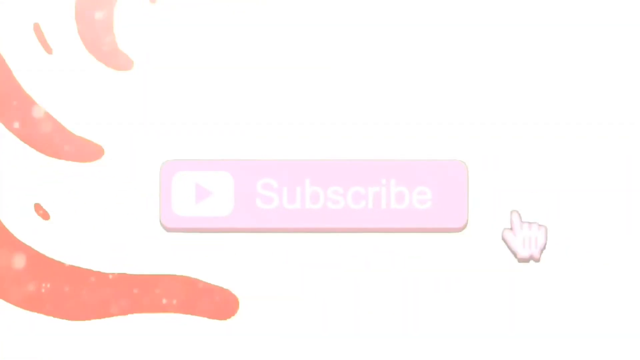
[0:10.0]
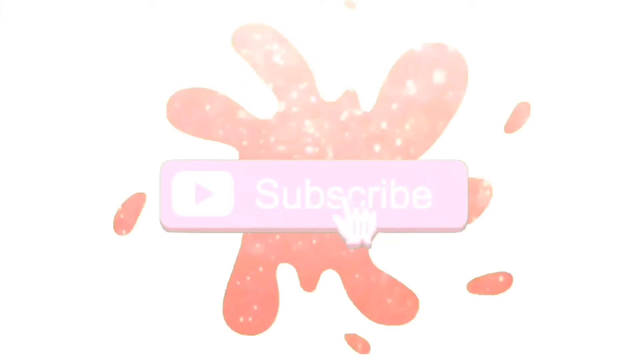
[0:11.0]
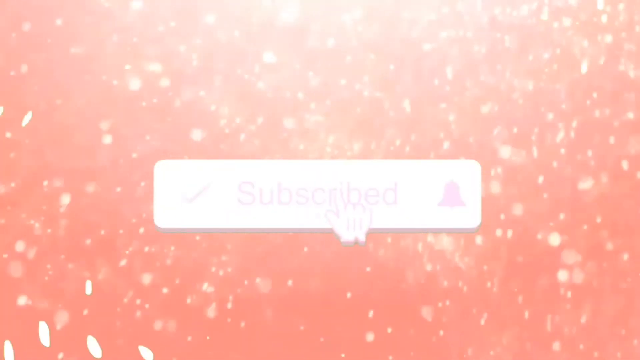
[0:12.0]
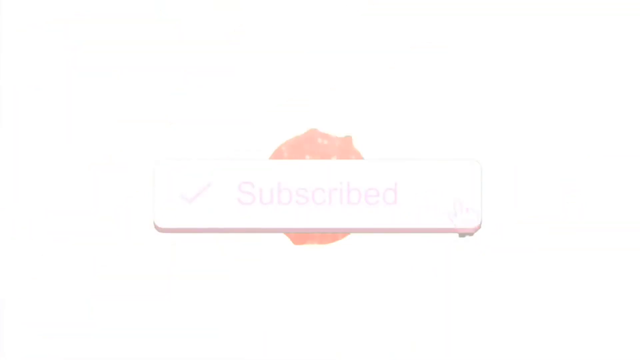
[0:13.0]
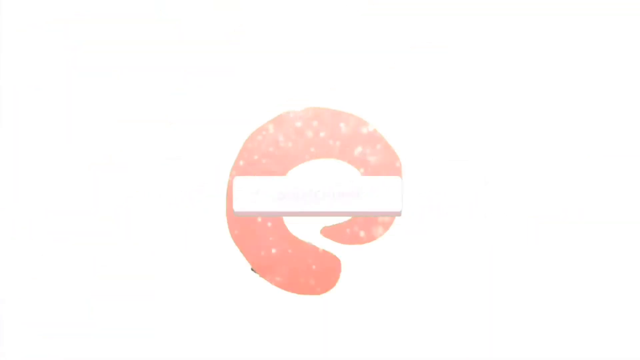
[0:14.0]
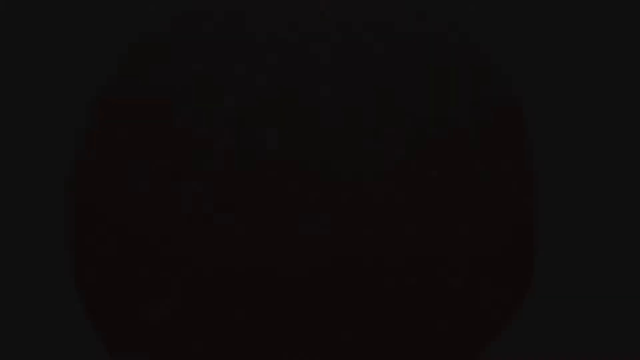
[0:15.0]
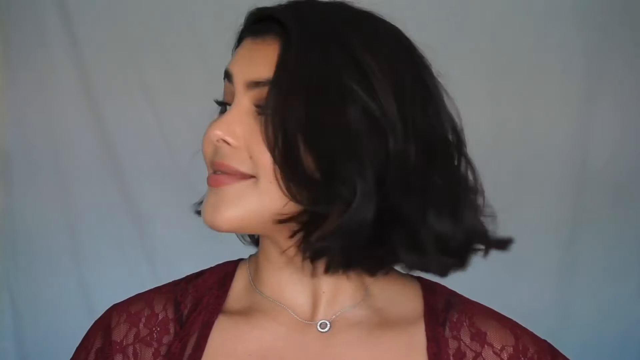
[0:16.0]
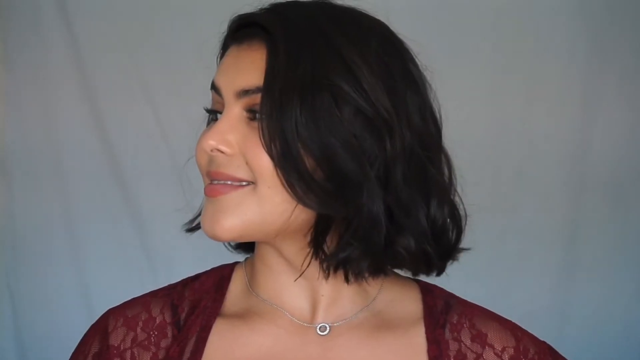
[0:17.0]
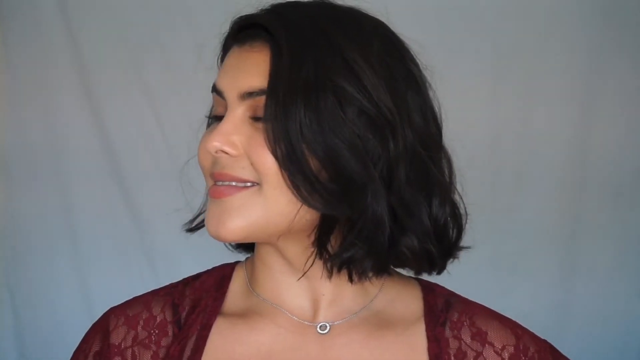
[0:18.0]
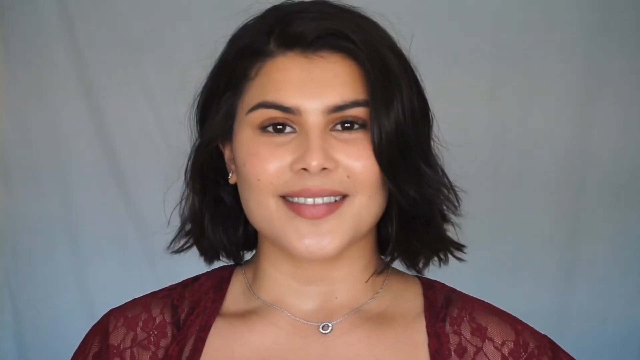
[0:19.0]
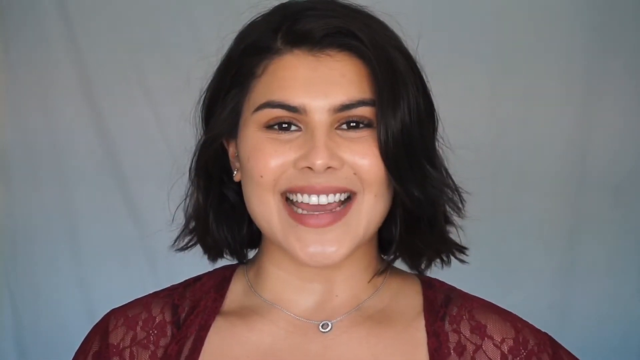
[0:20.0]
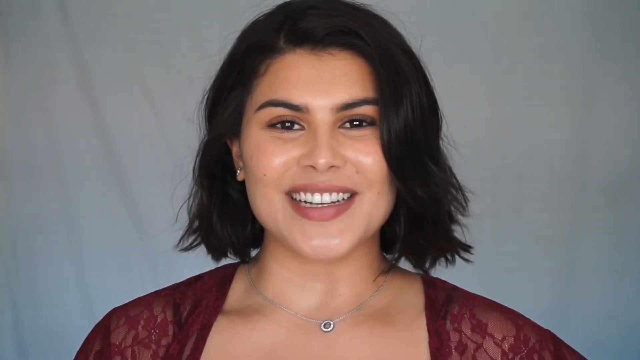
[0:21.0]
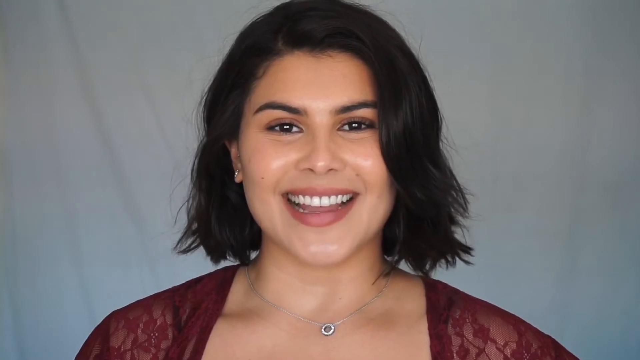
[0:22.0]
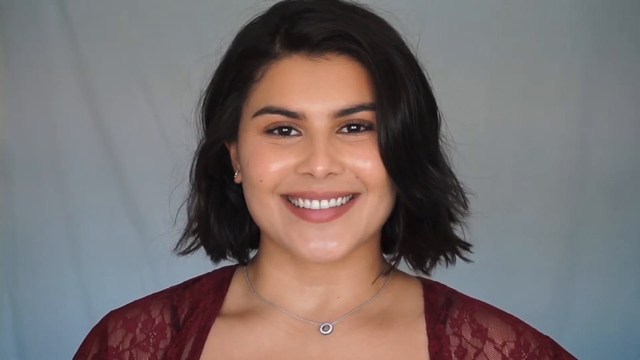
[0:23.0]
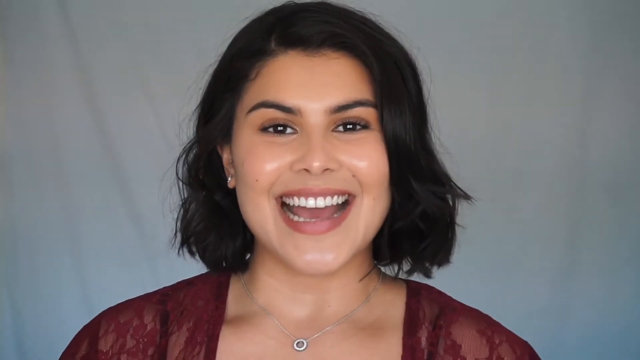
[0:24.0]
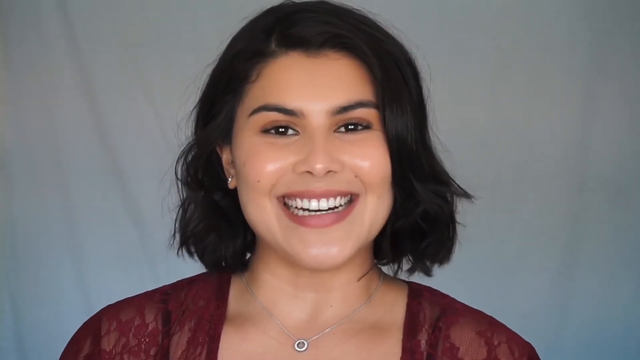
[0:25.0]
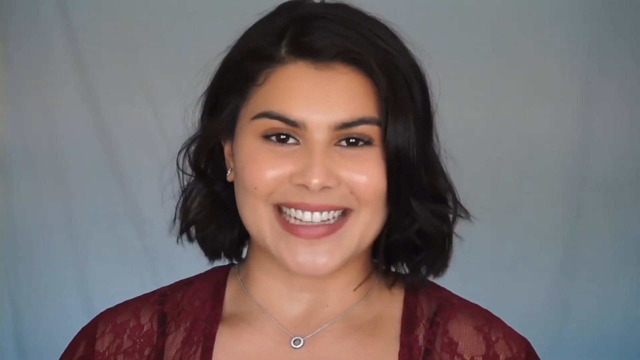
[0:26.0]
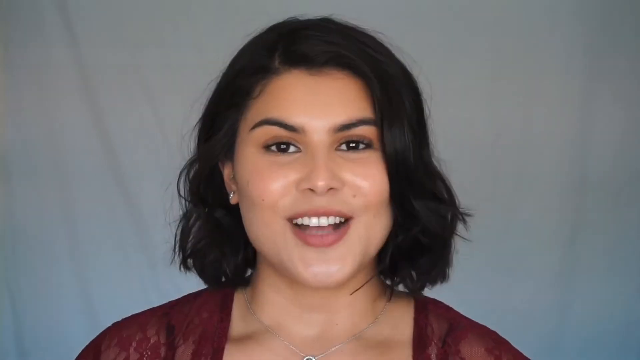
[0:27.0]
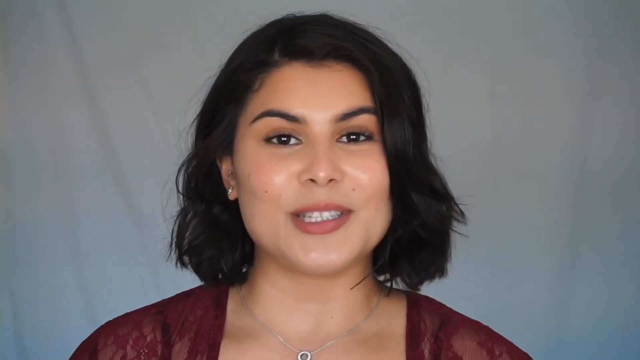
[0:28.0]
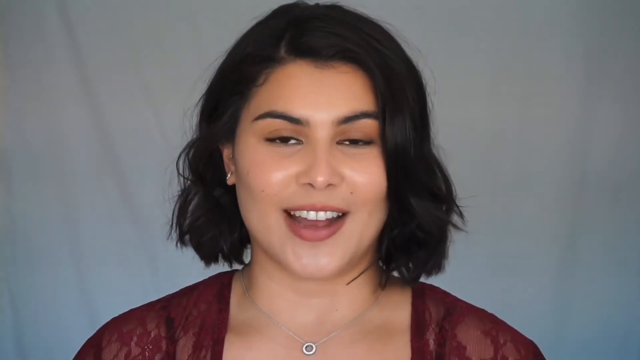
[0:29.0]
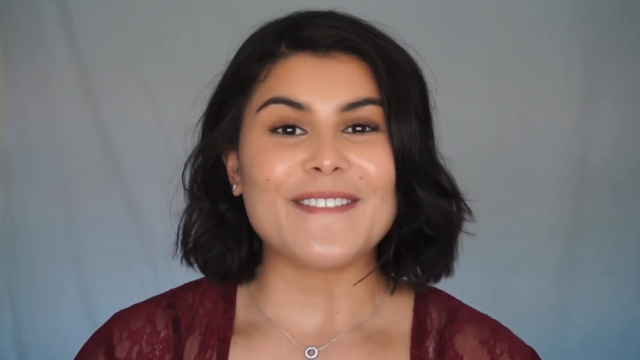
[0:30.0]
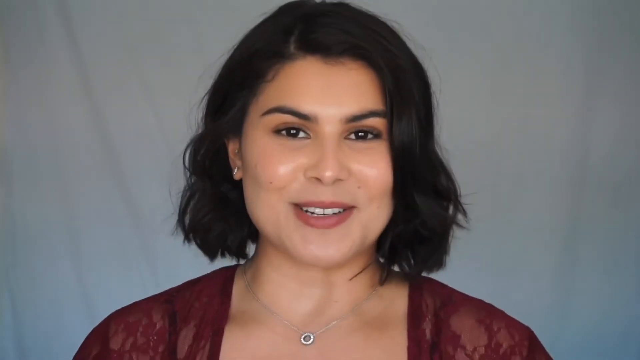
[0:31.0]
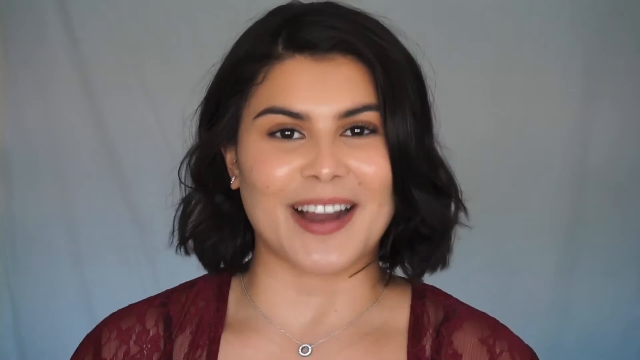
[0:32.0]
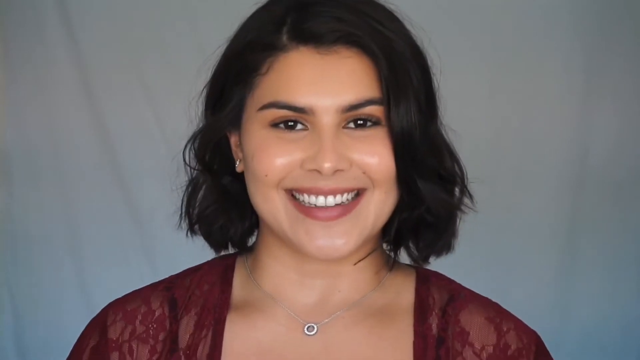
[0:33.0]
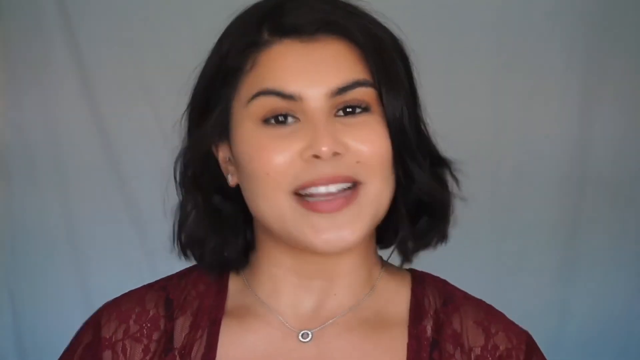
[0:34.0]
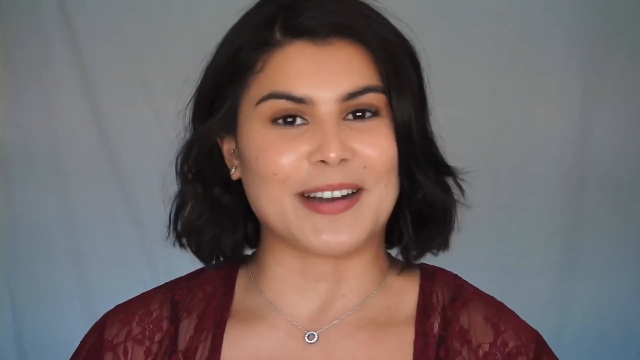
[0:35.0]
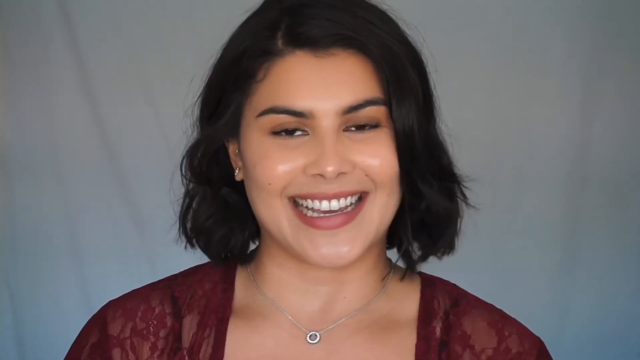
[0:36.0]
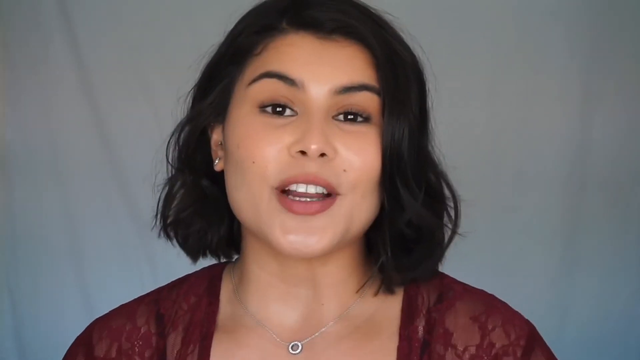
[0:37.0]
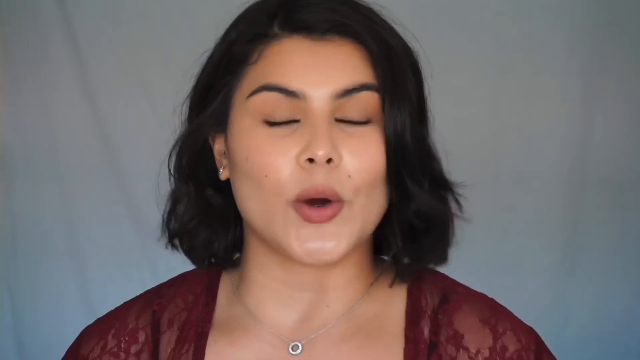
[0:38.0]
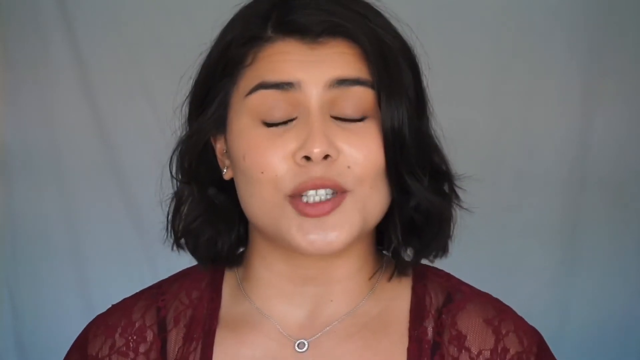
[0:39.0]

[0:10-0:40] As the peach lines disappear from the background, a cursor shaped like a hand, with the index finger pointing upward and the thumb pointing outward, moves across the screen toward the center of the subscribe logo. Pink lines reappear in the background and form a swirl shape that looks almost like the petals of a flower, growing until it fills the screen as the cursor moves across the button and clicks it on its right side. The subscribe button disappears, and the peach and gold confetti effect swirls in the middle of the screen until it mixes through to show a woman standing in front of a white curtain. In an extreme close-up, only her head and the very top of her shoulders are visible. She has black-brown hair cut into a bob that is lightly curled and tousled. She wears a silver necklace with a perfectly circular pendant that looks like it has a gemstone inside, with diamonds or gemstones around the edge, and a burgundy lace top. At first her head is turned so she looks out of the left side of the frame, but she soon turns to look directly at the camera. She has brown eyes and wears quite muted makeup in natural tones. She smiles broadly and begins speaking directly to the camera. A jump cut leads to almost the same shot as she continues speaking to the camera, and after one more jump cut she continues to smile broadly and speak directly to the viewer.